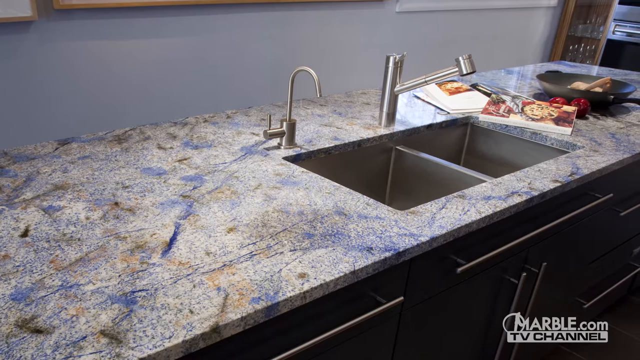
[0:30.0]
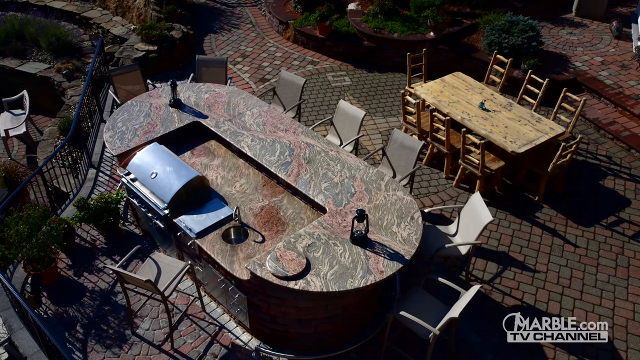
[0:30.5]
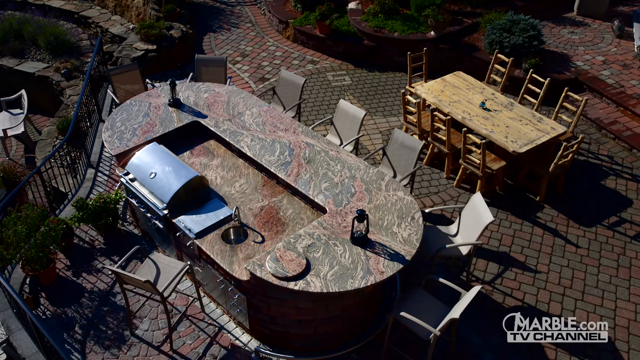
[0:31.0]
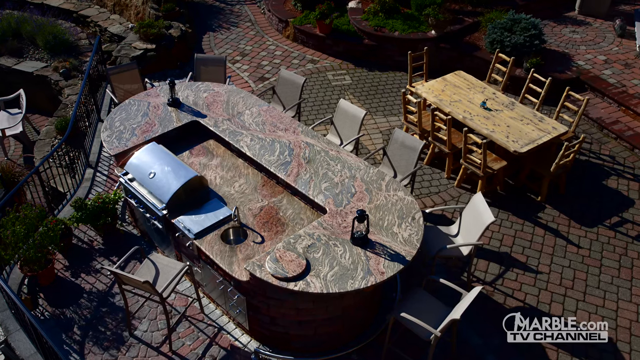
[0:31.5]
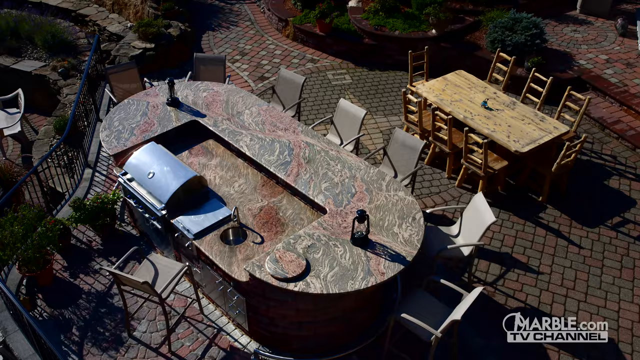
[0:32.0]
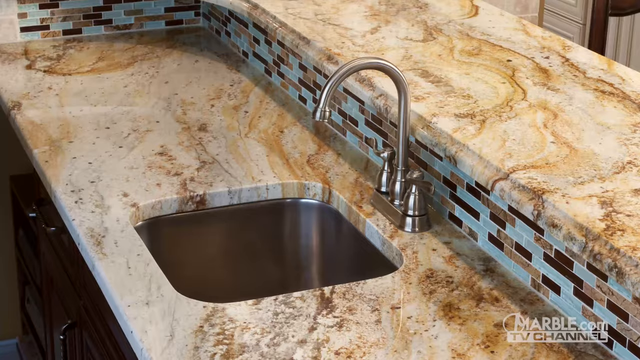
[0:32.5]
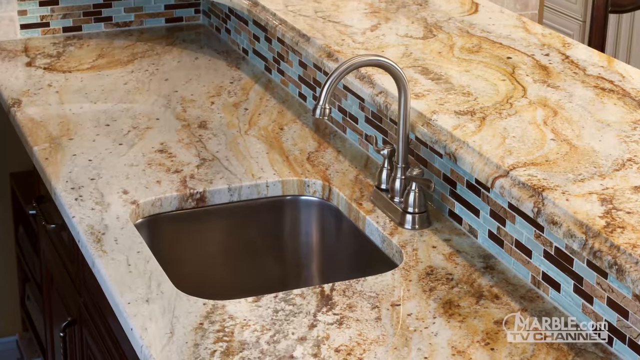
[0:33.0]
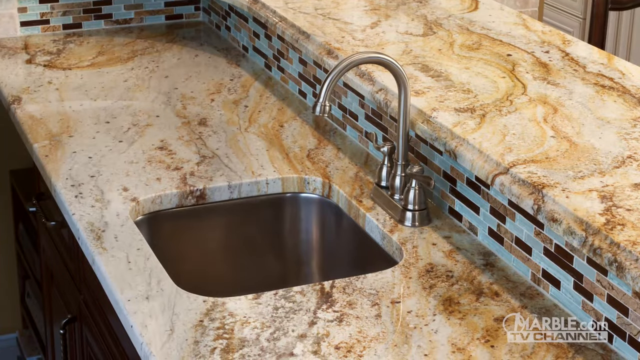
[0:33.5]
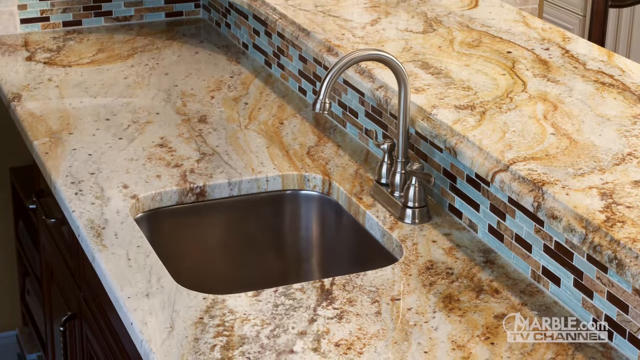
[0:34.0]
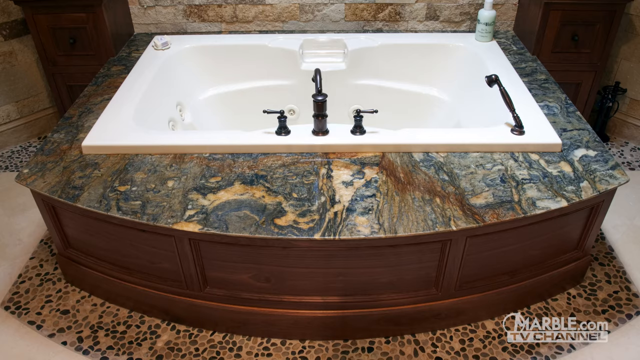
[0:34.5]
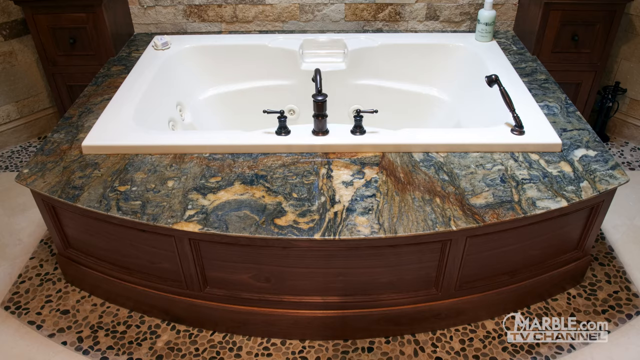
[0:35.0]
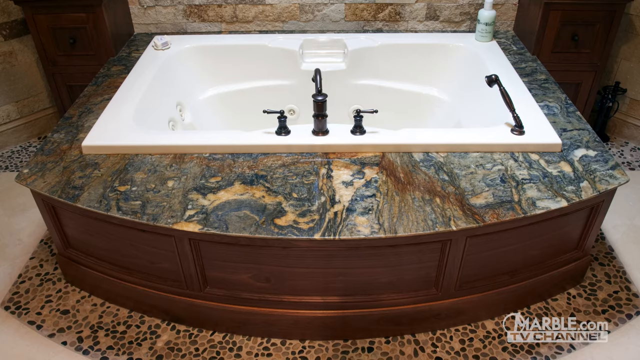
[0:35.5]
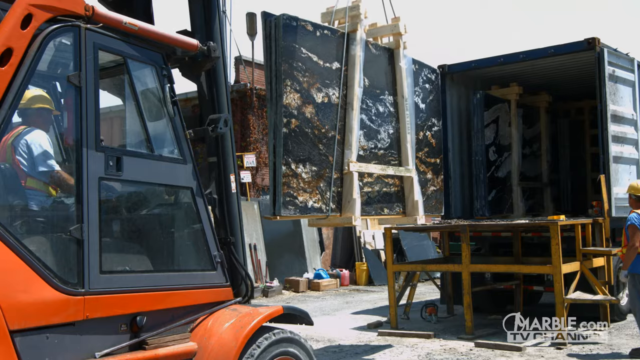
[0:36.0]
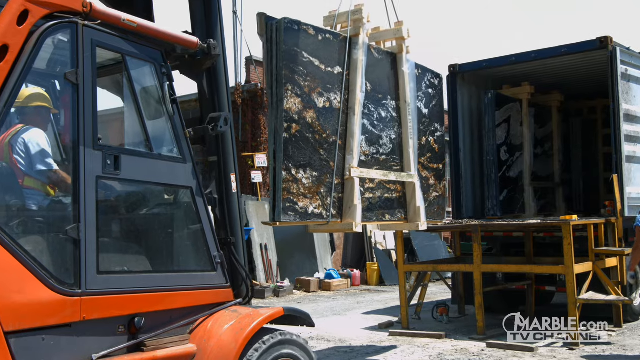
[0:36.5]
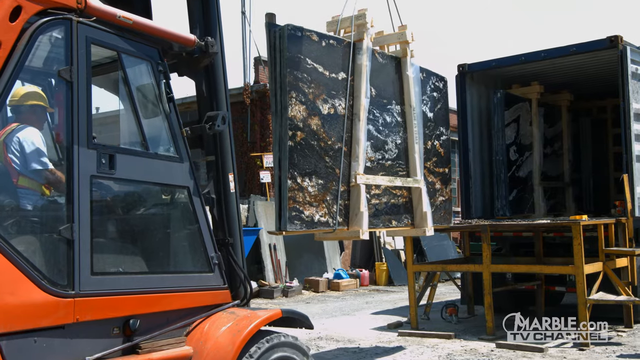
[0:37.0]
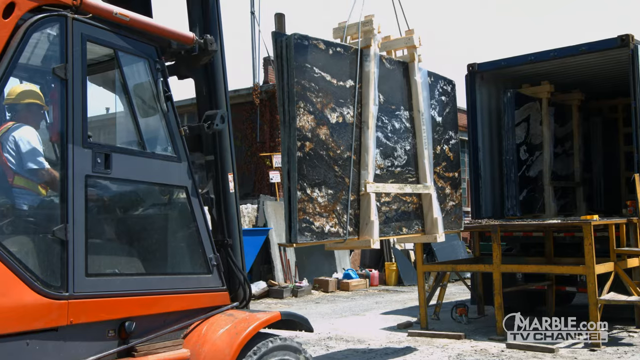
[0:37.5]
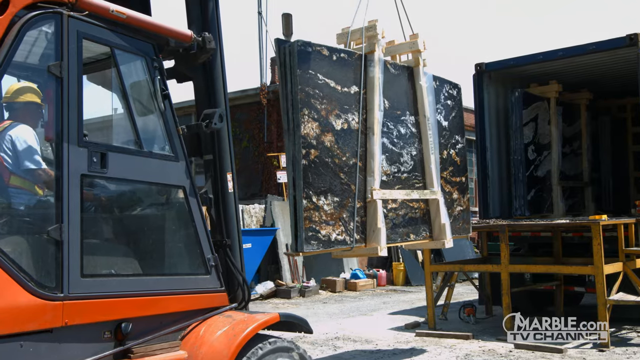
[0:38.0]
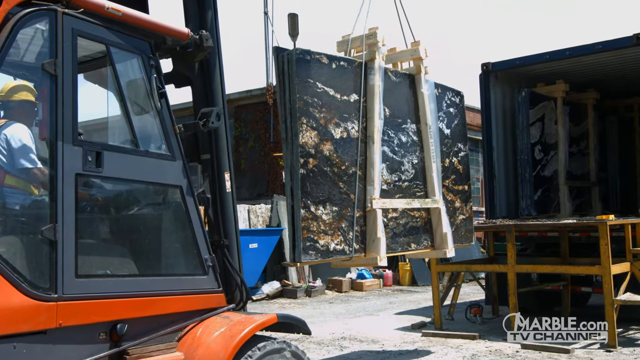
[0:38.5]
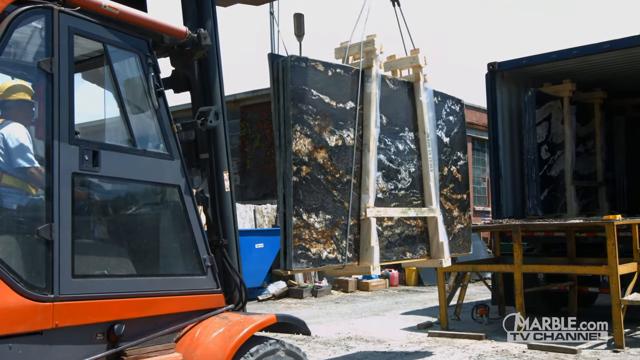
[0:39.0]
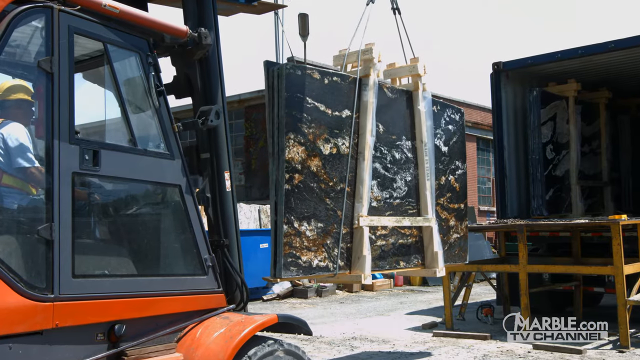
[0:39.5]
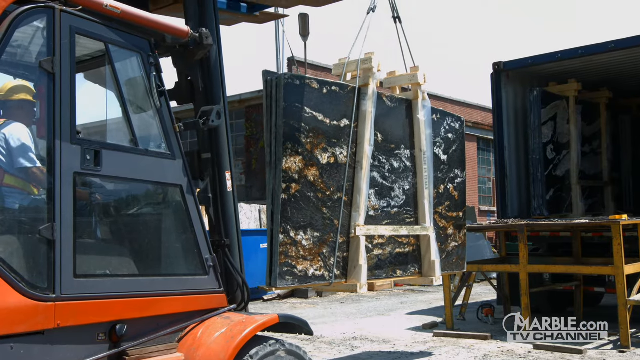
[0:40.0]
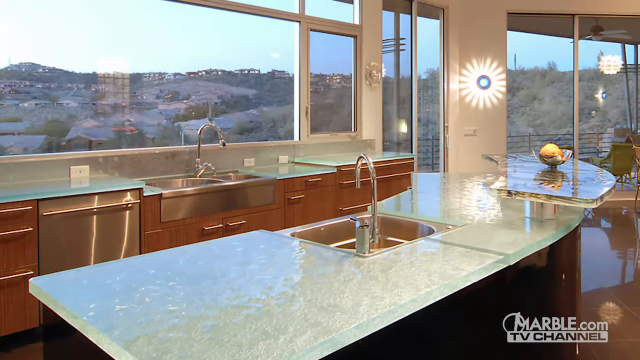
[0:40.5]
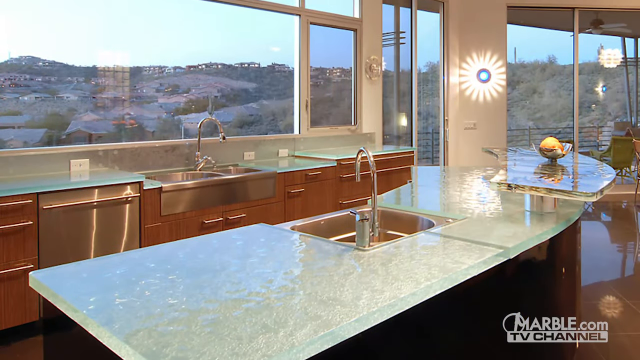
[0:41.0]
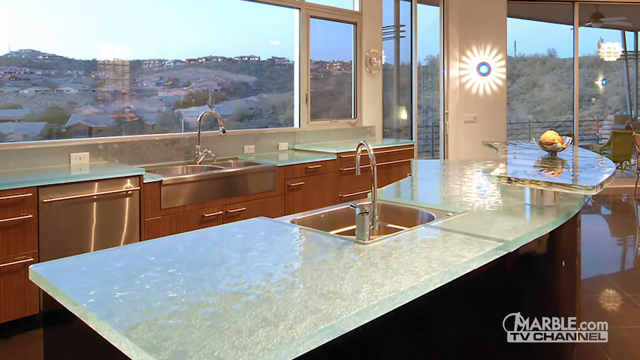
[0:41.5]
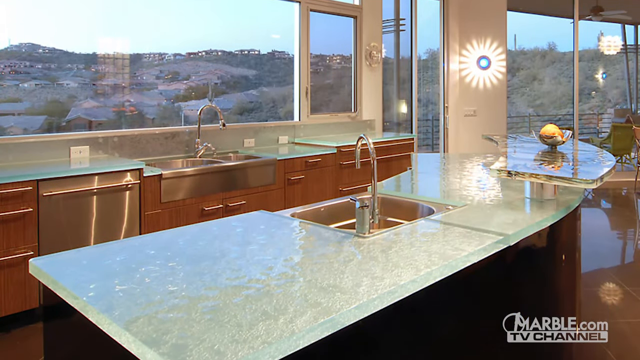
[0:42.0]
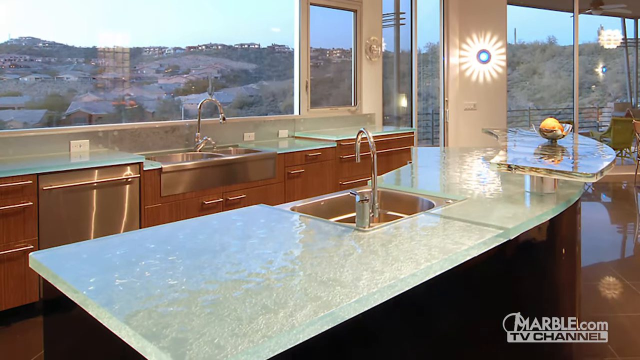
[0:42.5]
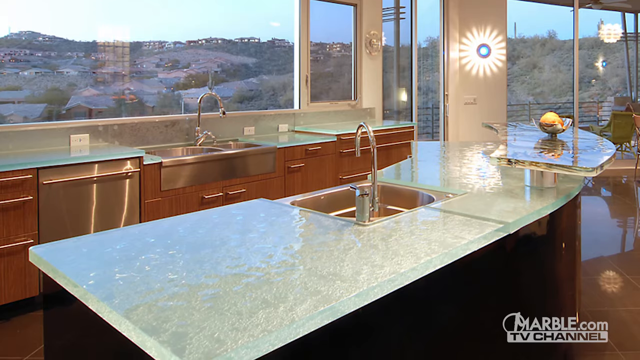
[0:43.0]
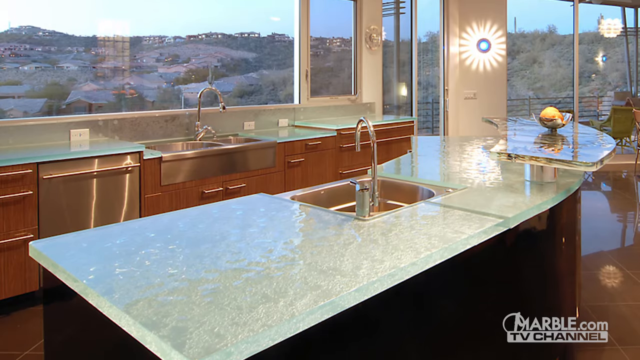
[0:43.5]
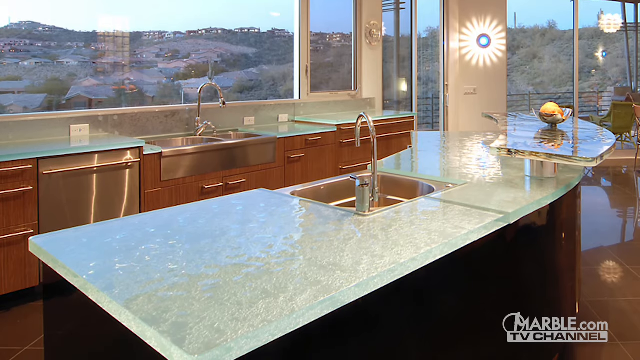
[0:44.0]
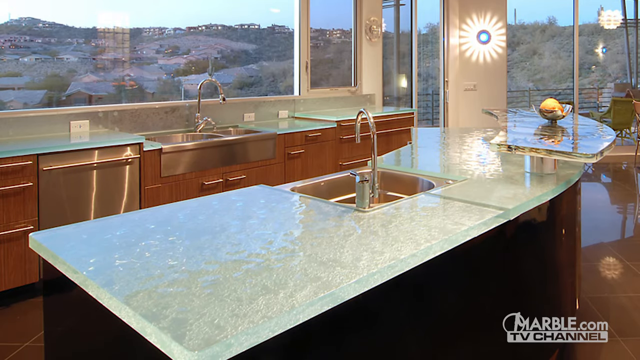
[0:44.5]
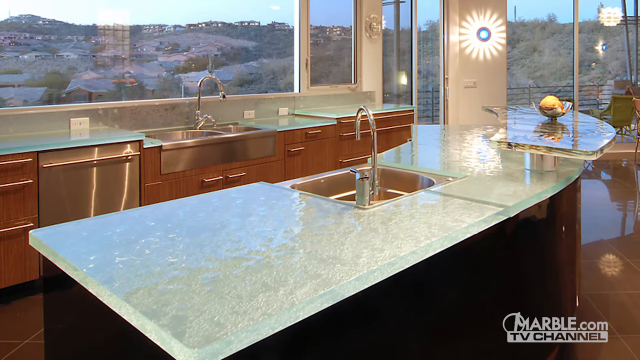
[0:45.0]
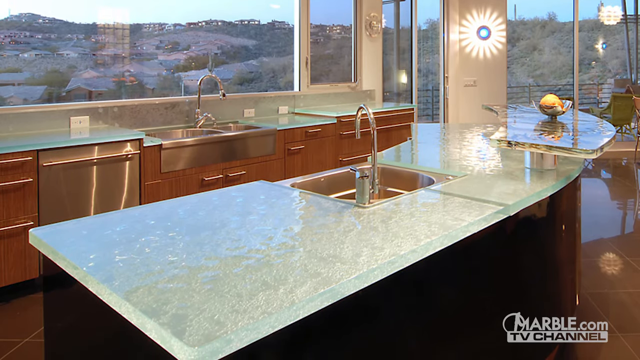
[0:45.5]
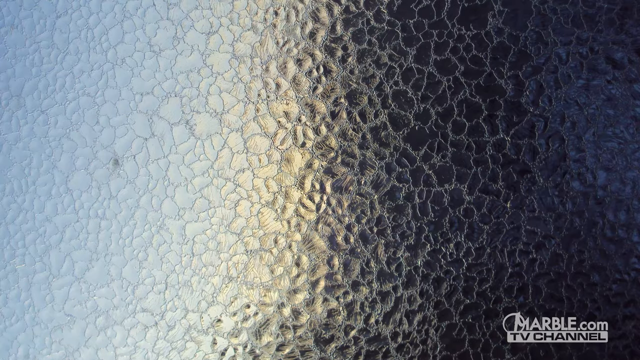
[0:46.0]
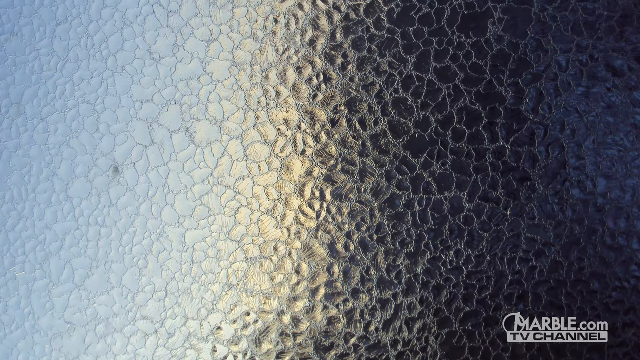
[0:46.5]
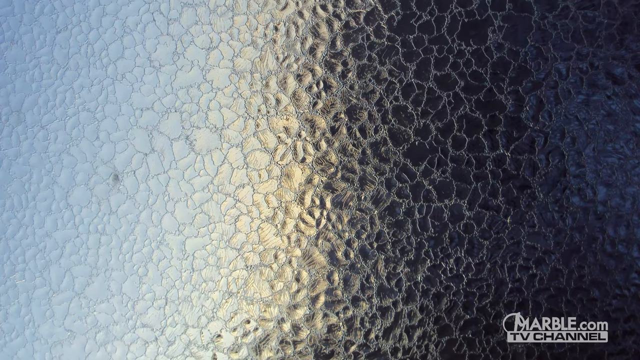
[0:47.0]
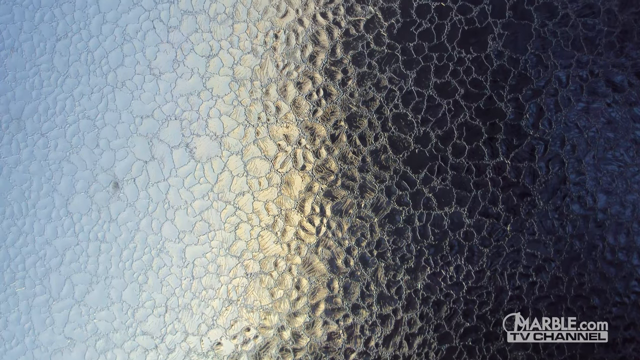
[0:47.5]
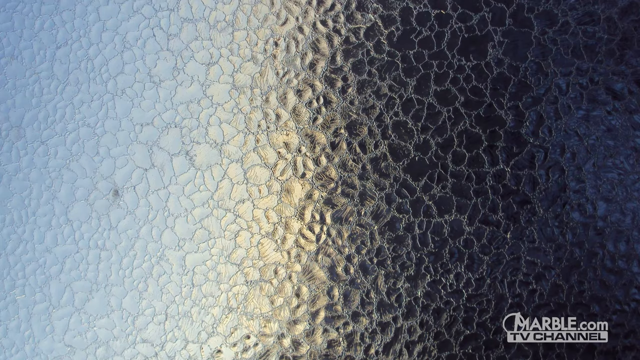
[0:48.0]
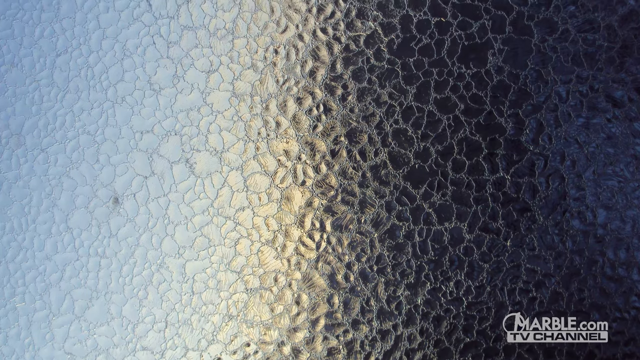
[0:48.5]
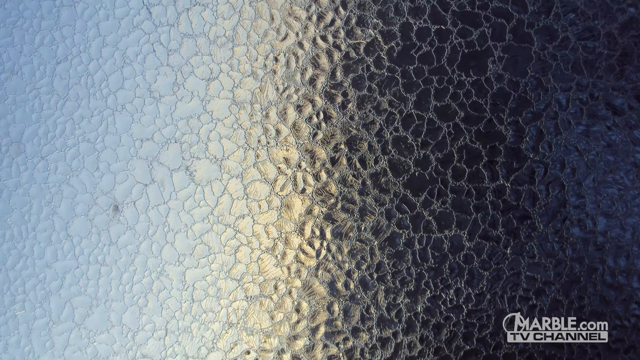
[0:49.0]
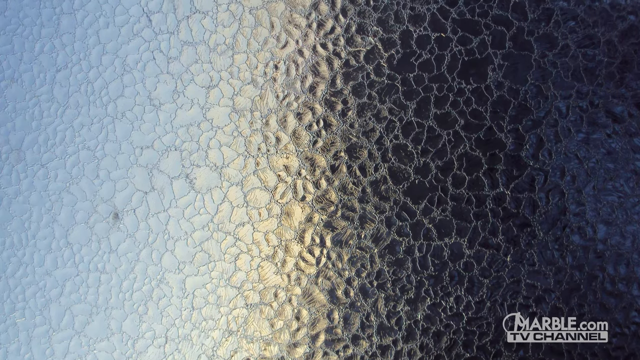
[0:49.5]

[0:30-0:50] What appears to be a granite table with several chairs around it is shown; it seems to be very heavy. A granite kitchen sink with ornamental details follows. Next, a very heavy piece of granite is transported inside a truck, with a tractor lift carrying it as it is lifted and placed in the truck or taken out of it. Details of a kitchen made entirely of granite appear, apparently presented as a luxury item, and the view zooms in to show the appearance and texture of the granites up close.